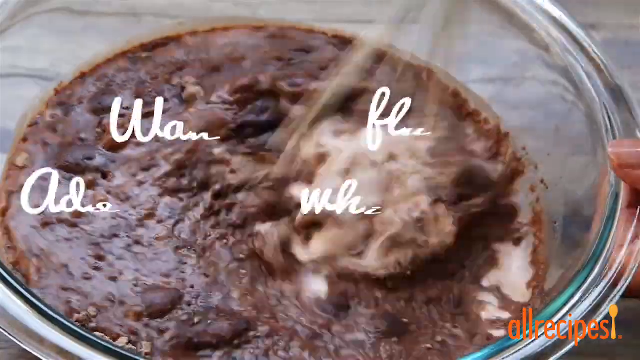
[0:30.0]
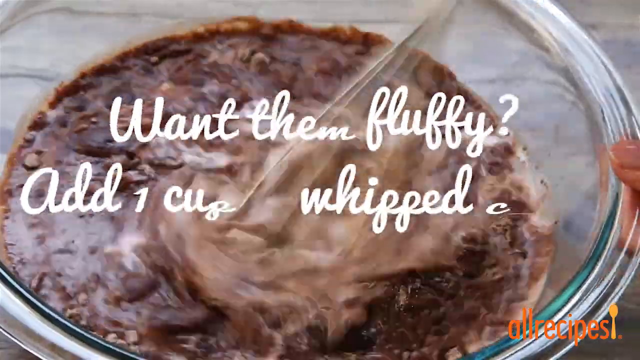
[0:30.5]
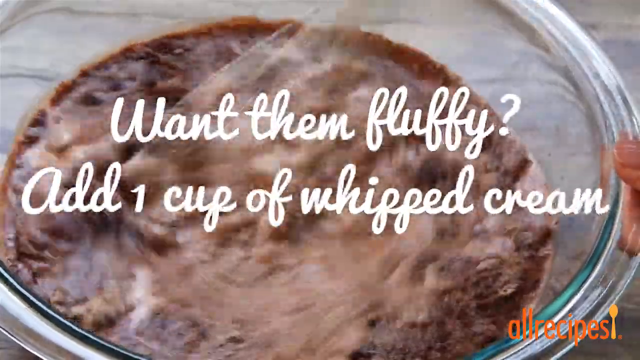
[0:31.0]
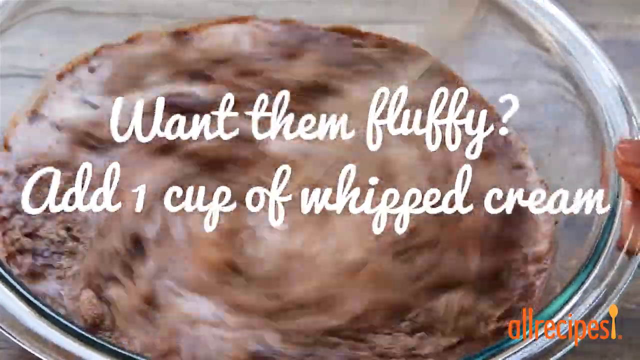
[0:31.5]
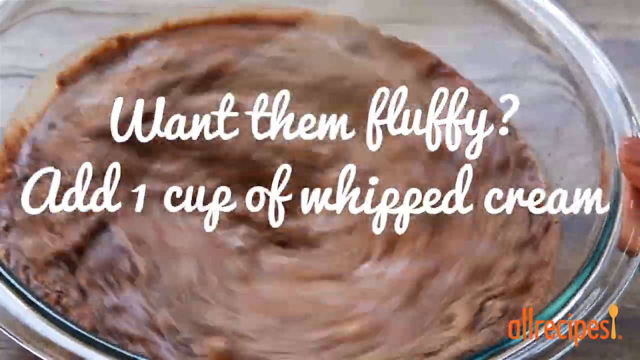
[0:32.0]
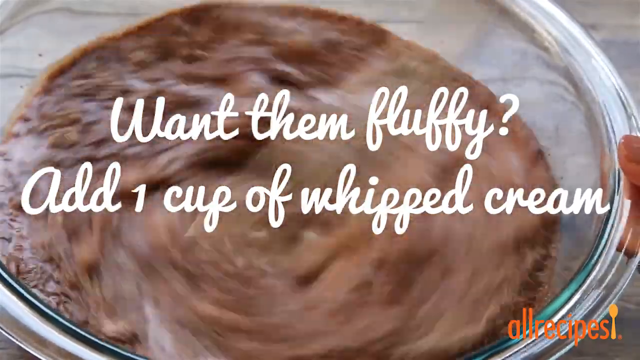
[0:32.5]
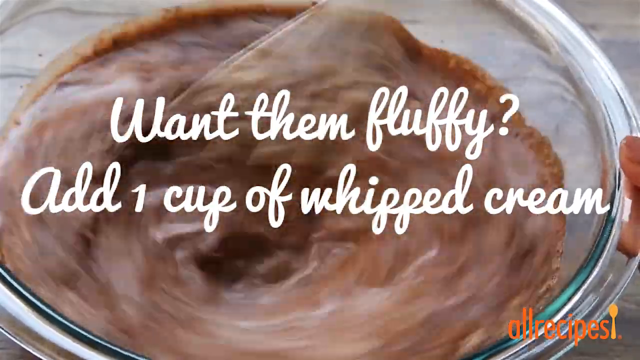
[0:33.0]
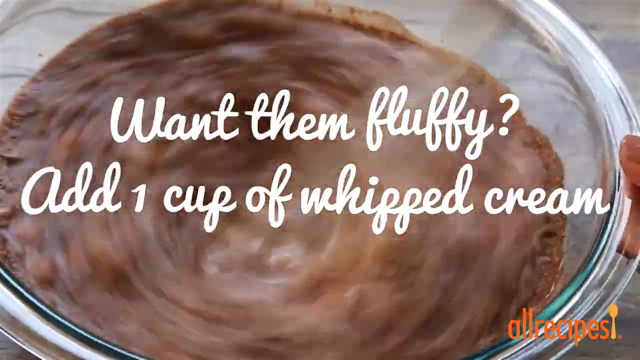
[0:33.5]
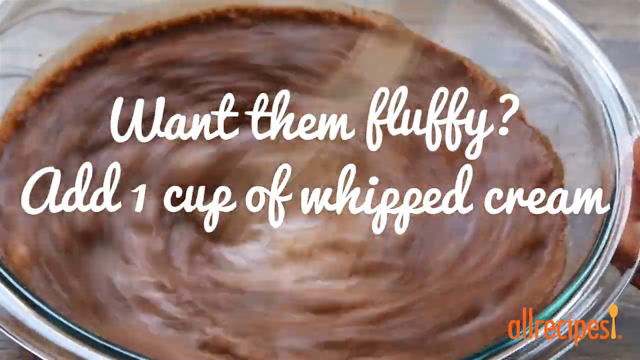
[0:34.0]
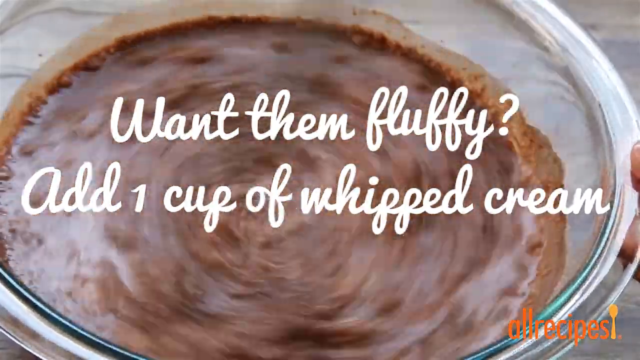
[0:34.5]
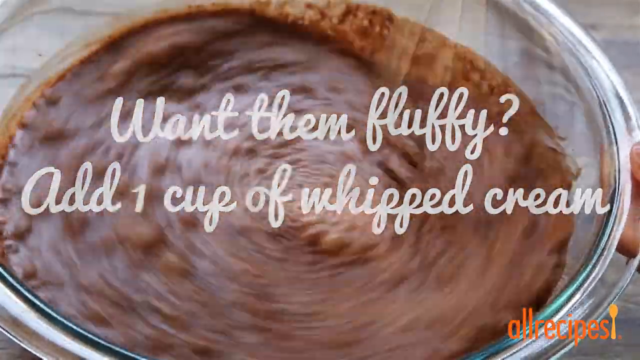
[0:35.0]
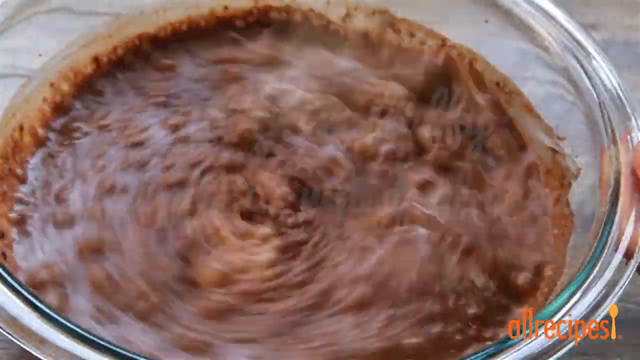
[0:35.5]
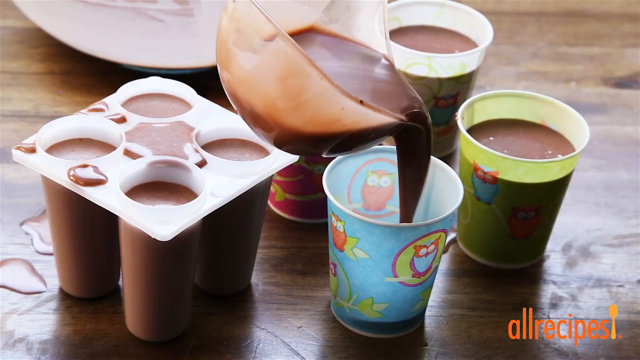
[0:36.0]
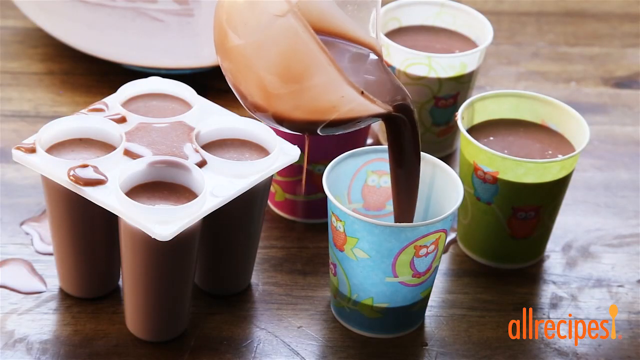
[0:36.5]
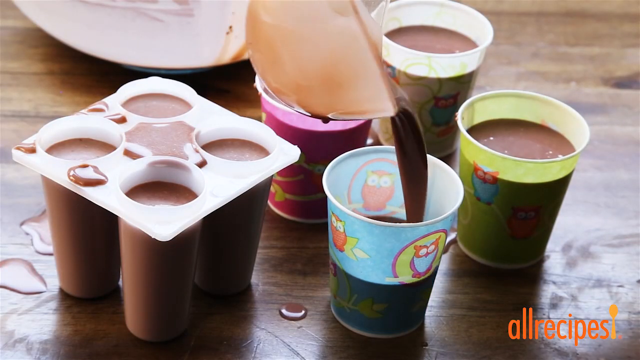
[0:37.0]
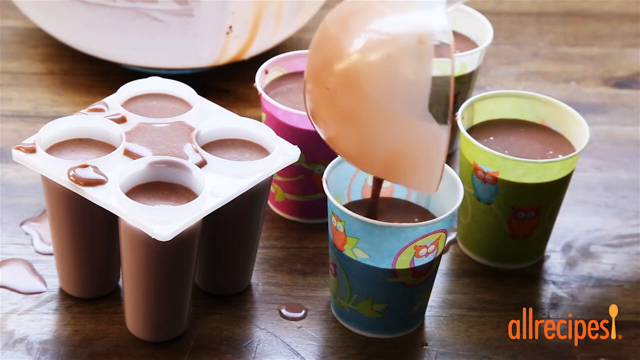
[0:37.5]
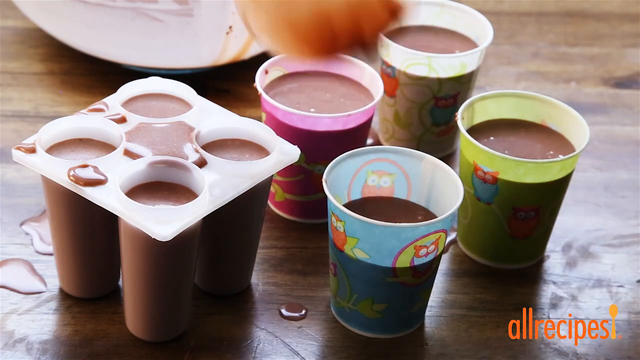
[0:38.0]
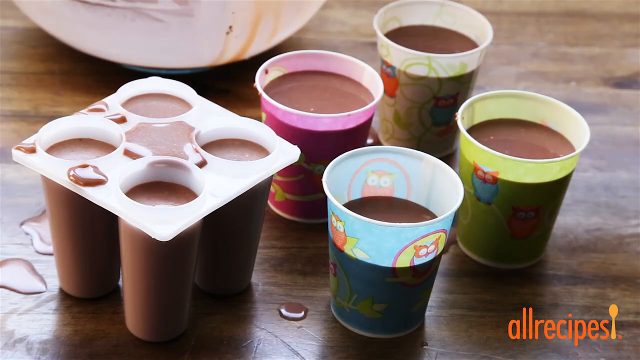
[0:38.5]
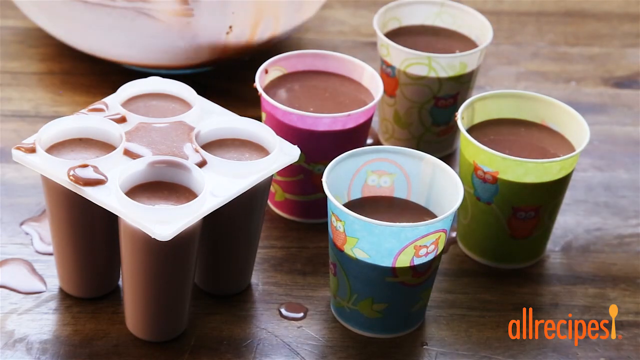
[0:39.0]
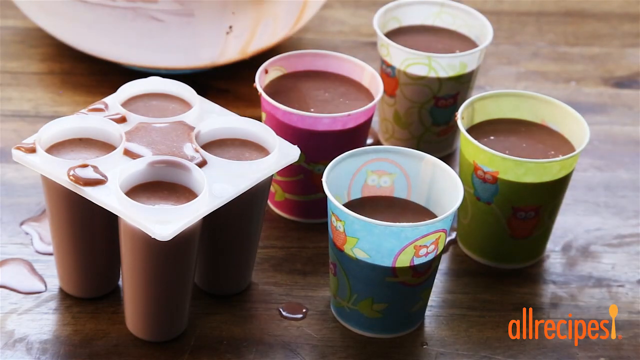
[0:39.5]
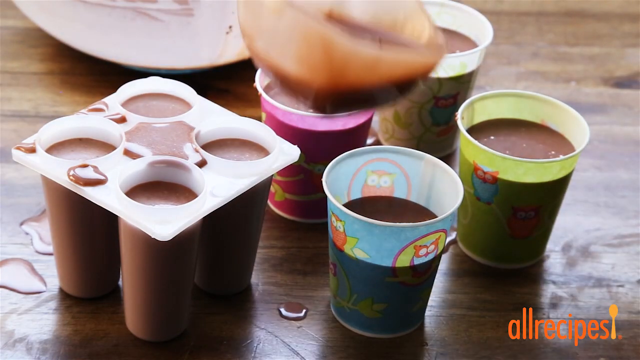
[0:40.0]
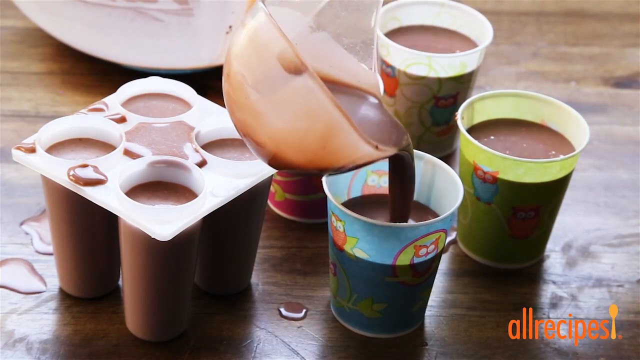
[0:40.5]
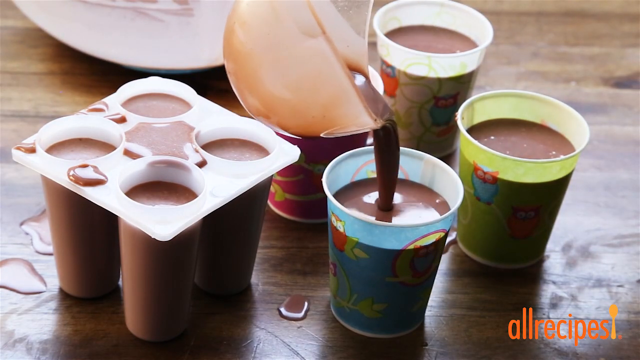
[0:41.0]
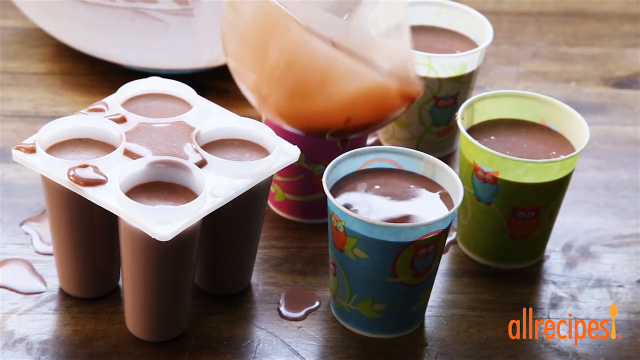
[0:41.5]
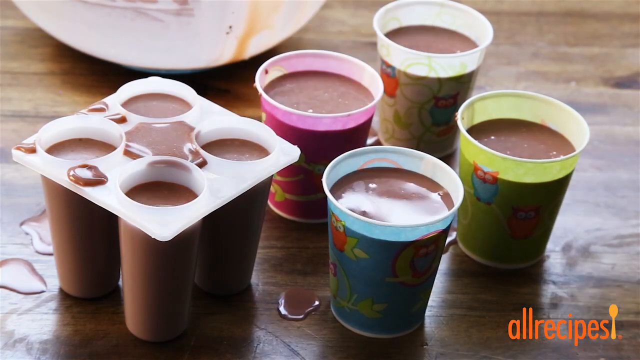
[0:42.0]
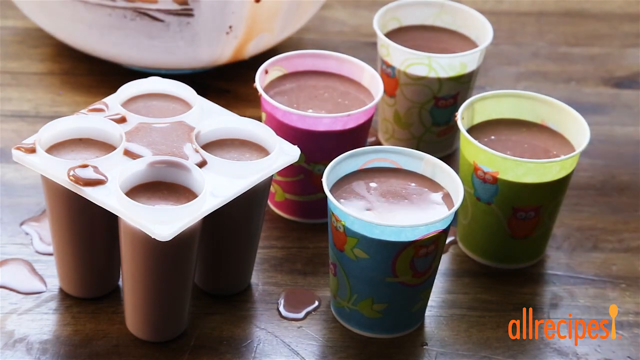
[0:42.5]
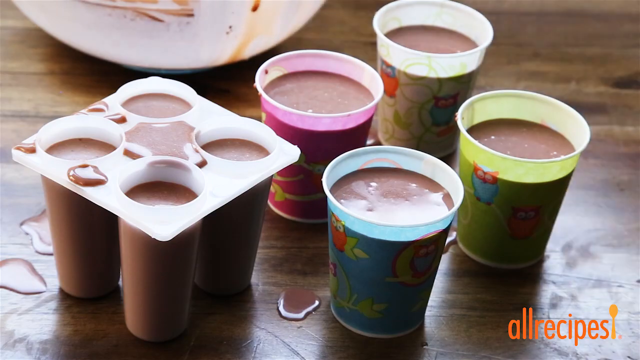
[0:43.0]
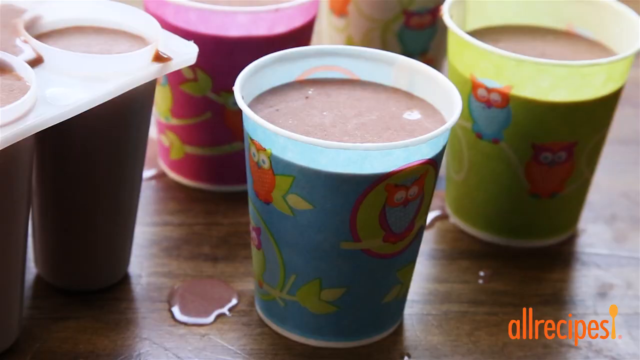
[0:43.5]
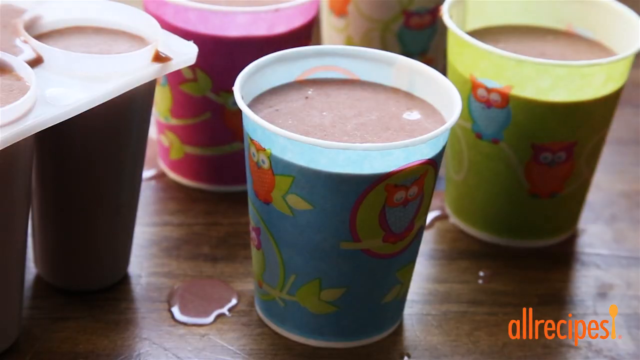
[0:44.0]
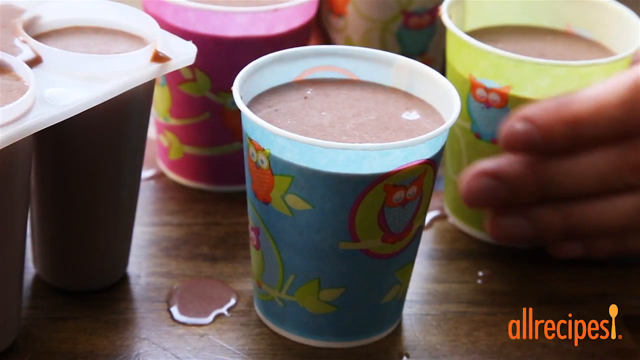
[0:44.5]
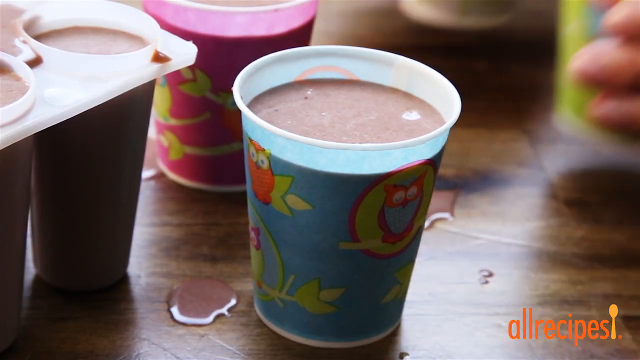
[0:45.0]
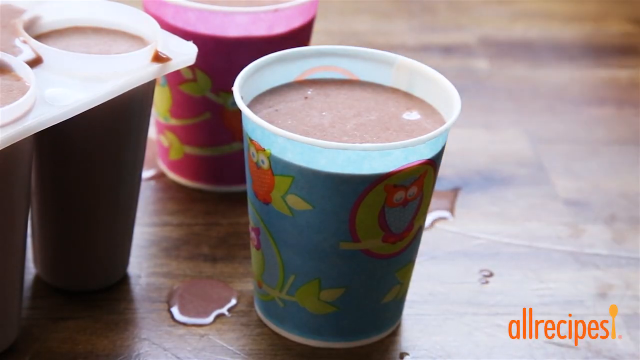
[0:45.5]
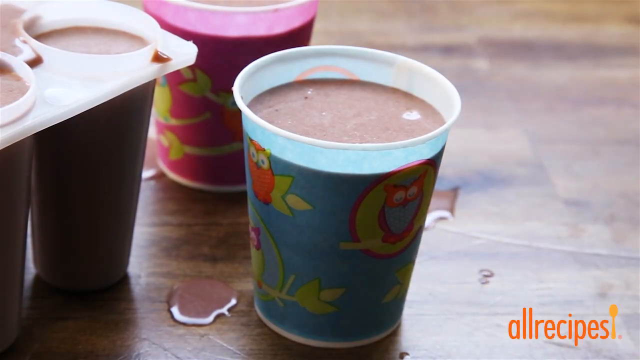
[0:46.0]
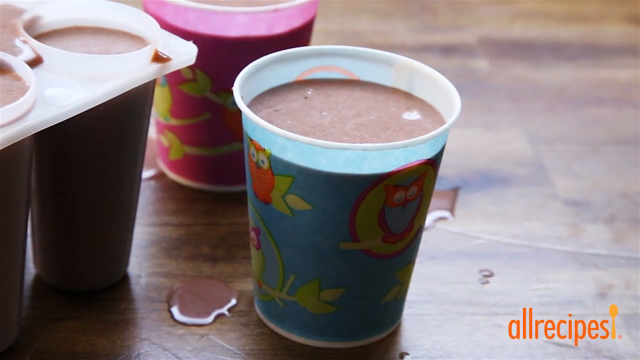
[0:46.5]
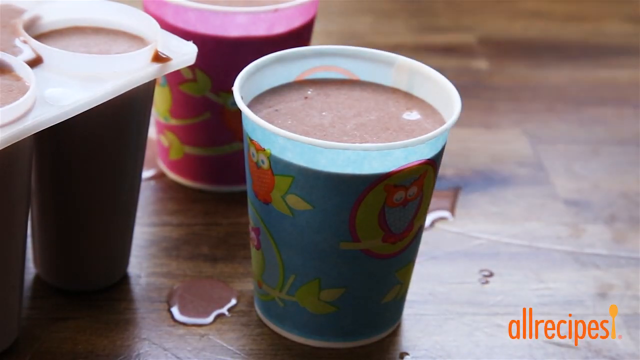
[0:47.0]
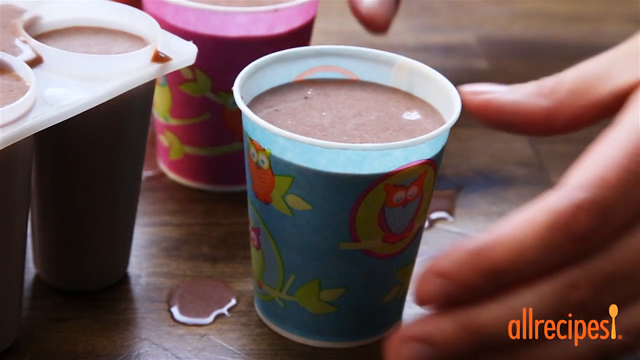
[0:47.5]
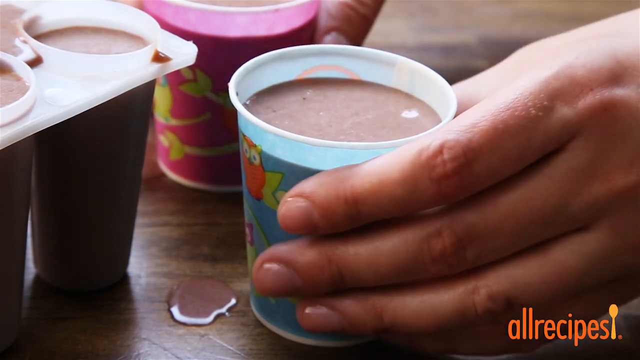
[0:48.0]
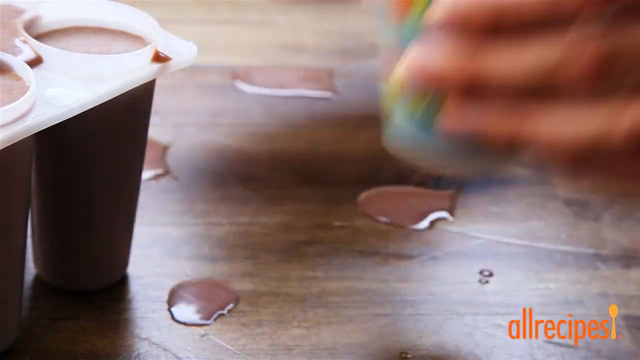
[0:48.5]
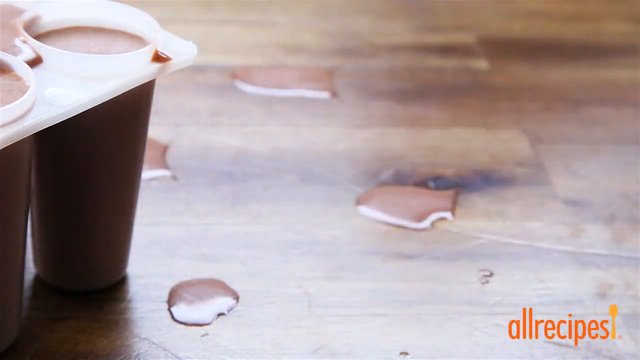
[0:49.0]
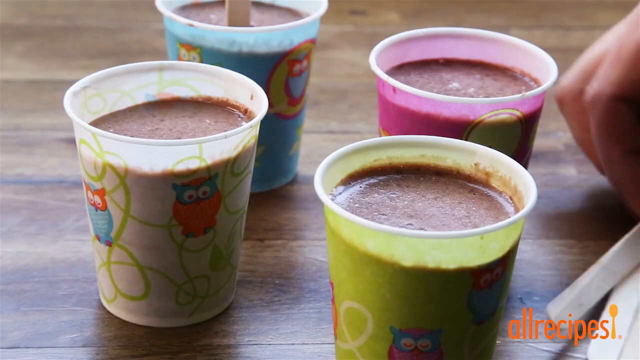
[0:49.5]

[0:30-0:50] In a close-up of the clear bowl, a chocolatey concoction is mixed with a whisk, and white text in front reads "want them fluffy add one cup of whipped cream". A bit of a finger is visible on the right-hand side of the bowl. After it is whipped for a while, the scene changes and the whipped chocolate mixture is poured with a ladle into little cups of different colors, such as blue, green and red, each with a little cartoon owl on it. On the left is a plastic object that looks like an ice cube tray with very long holes, and there is a bowl on the upper left as well, all on a brown wooden tabletop. The spoon comes back and pours some more into the bottom cup, which is blue. In a close-up of the cups, a hand starts to pull them away off camera to the right.